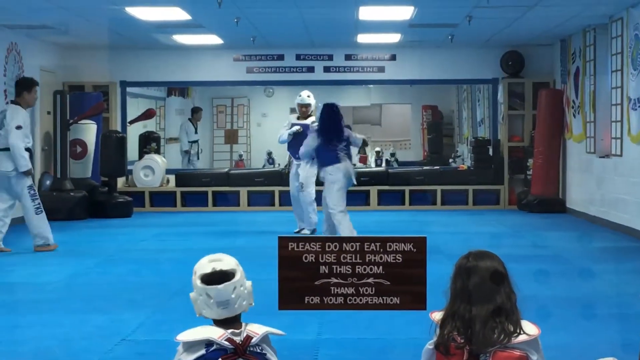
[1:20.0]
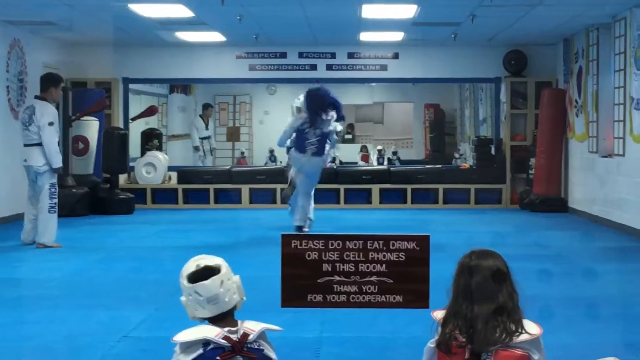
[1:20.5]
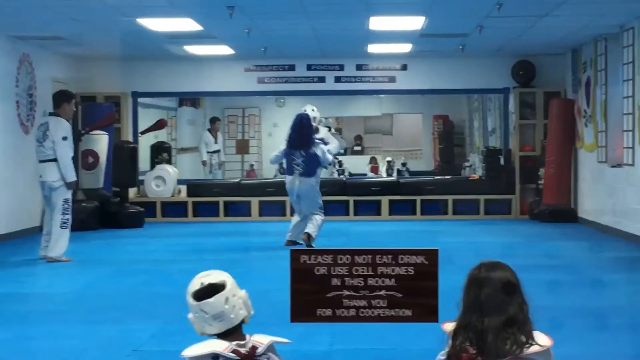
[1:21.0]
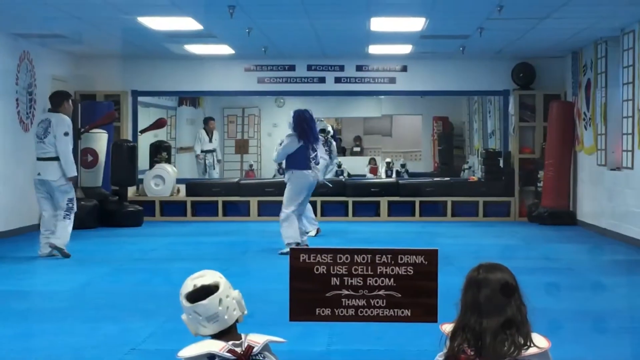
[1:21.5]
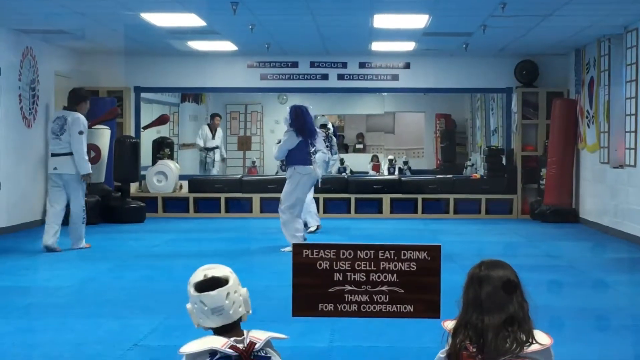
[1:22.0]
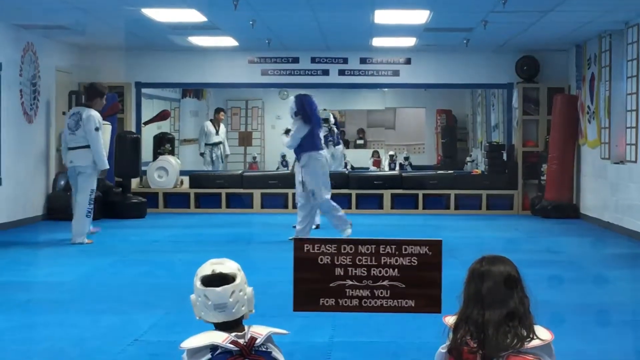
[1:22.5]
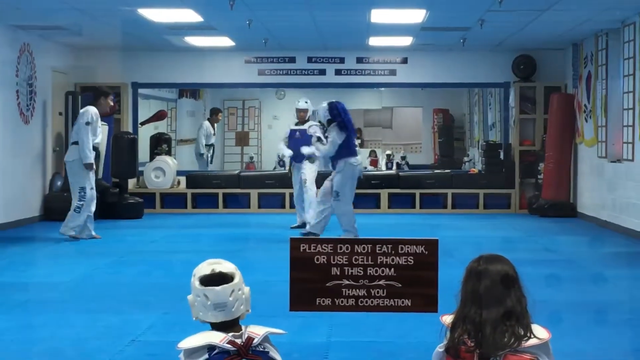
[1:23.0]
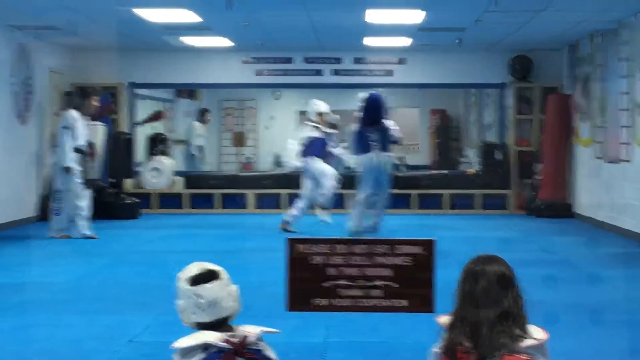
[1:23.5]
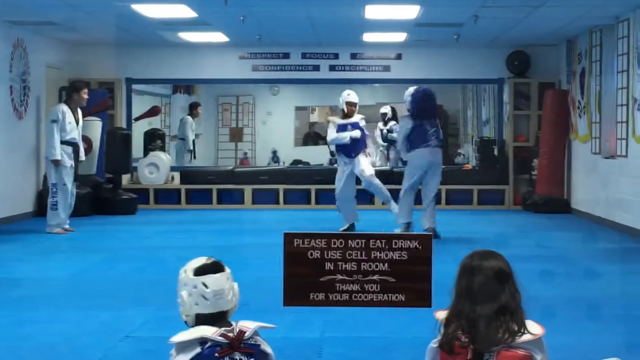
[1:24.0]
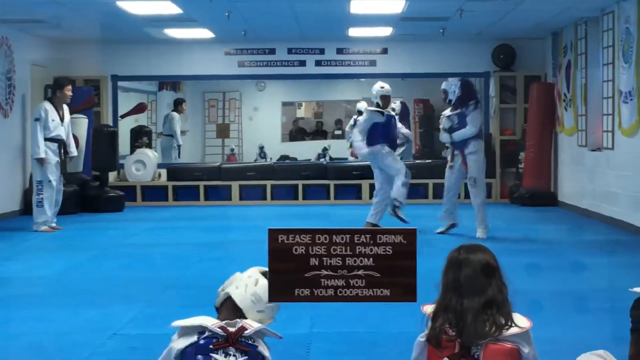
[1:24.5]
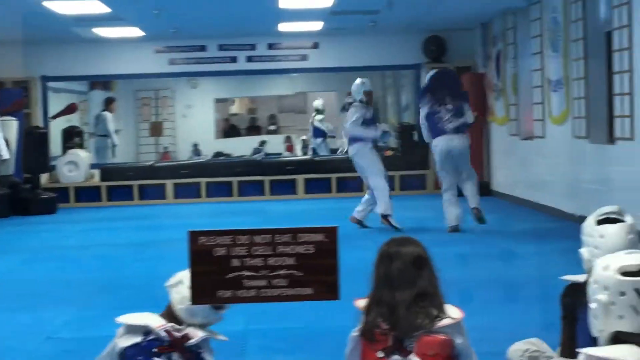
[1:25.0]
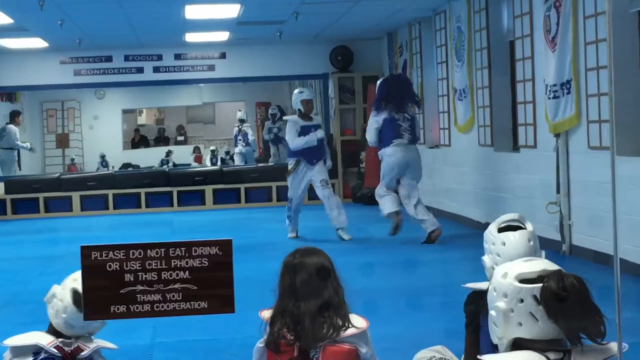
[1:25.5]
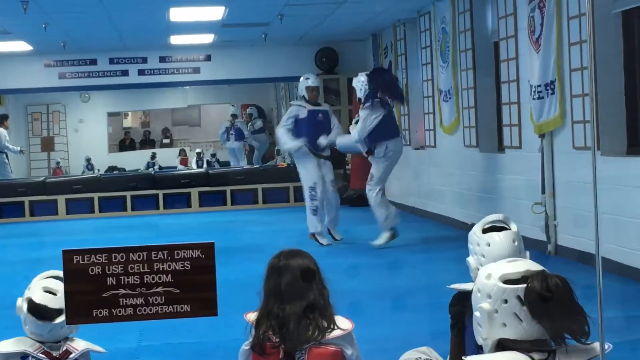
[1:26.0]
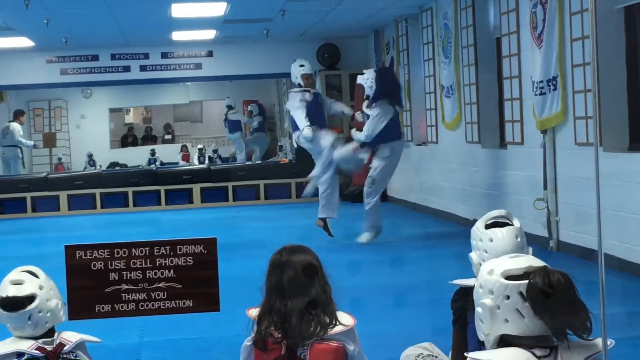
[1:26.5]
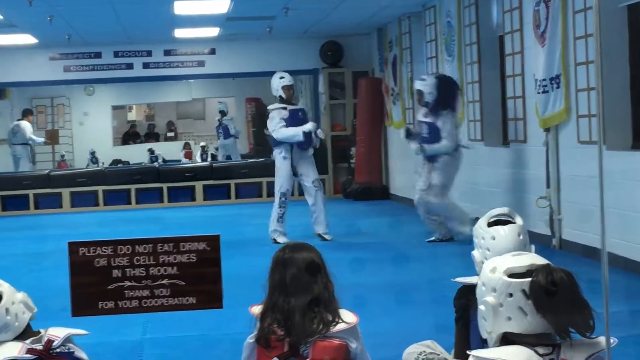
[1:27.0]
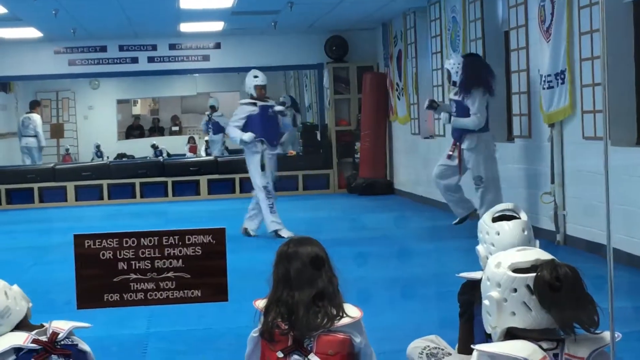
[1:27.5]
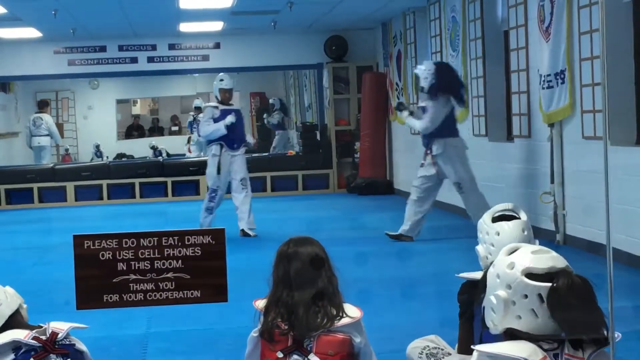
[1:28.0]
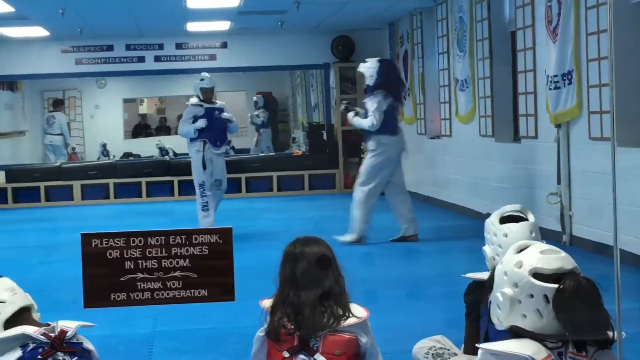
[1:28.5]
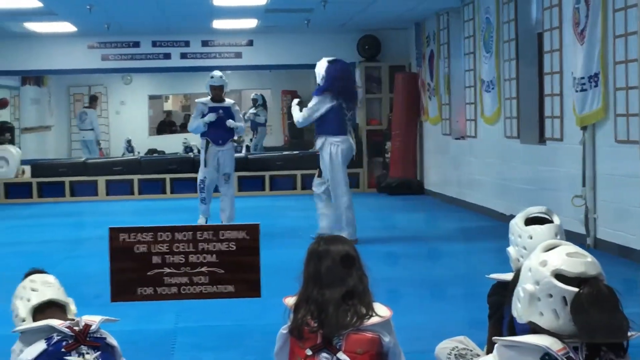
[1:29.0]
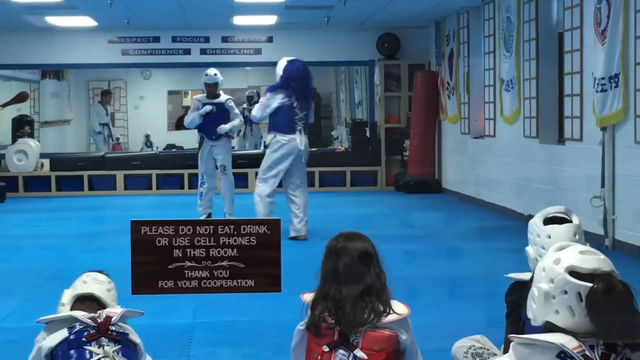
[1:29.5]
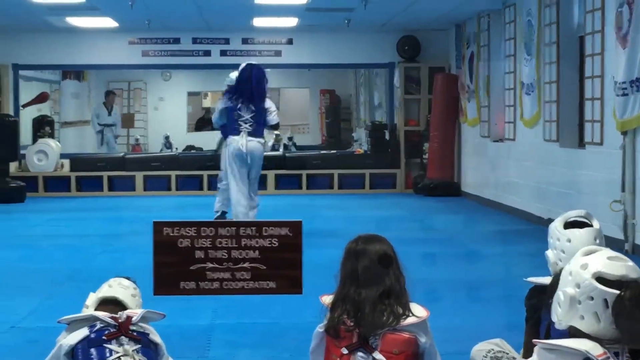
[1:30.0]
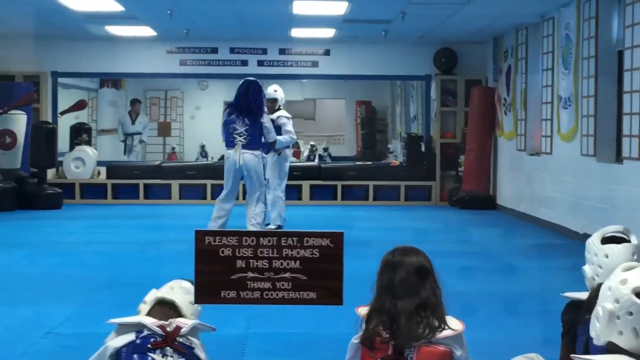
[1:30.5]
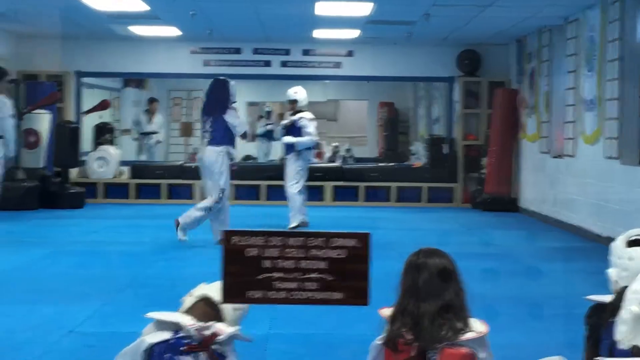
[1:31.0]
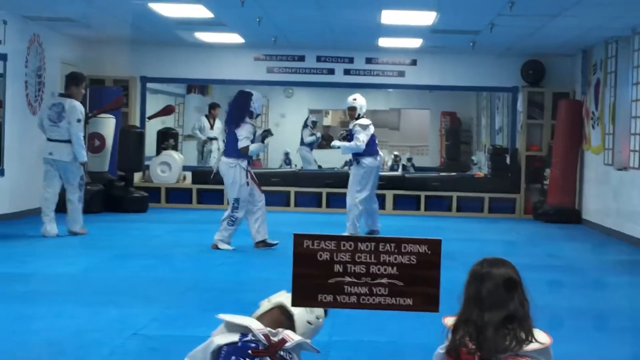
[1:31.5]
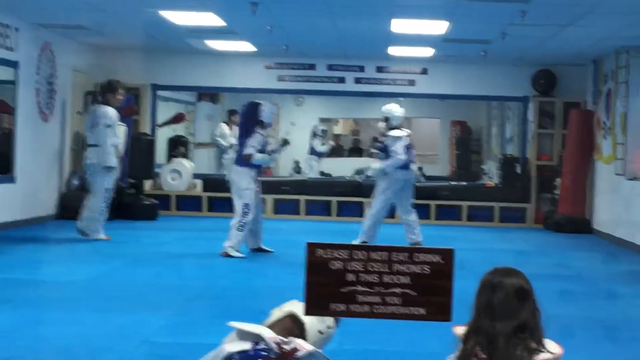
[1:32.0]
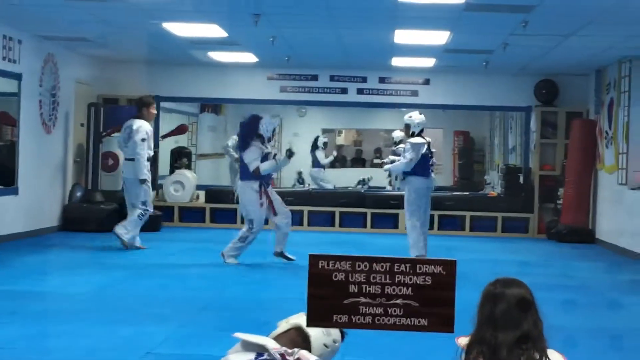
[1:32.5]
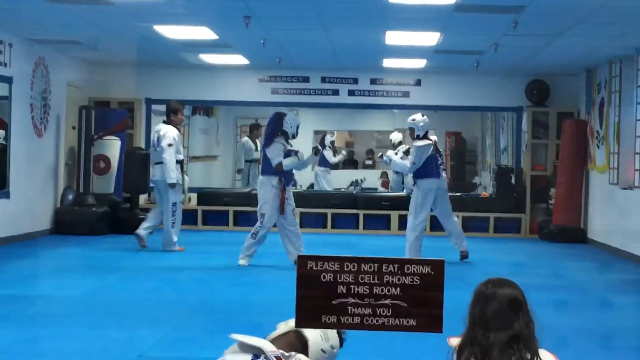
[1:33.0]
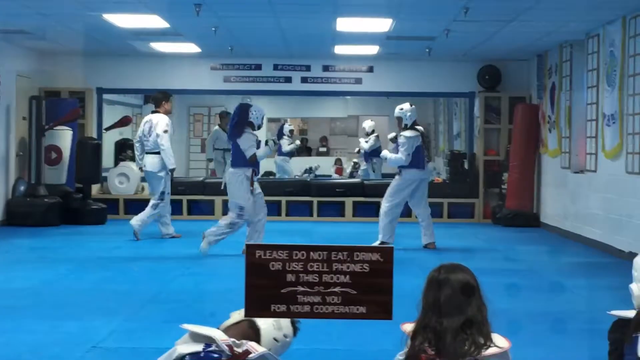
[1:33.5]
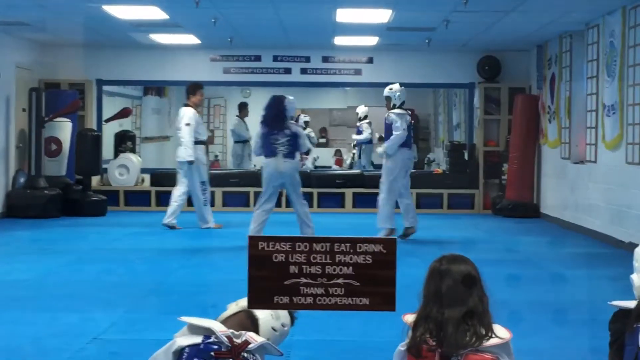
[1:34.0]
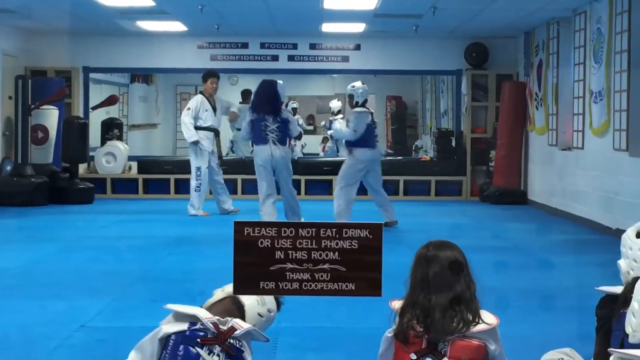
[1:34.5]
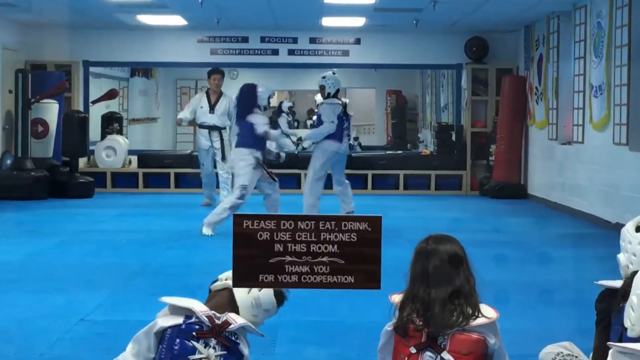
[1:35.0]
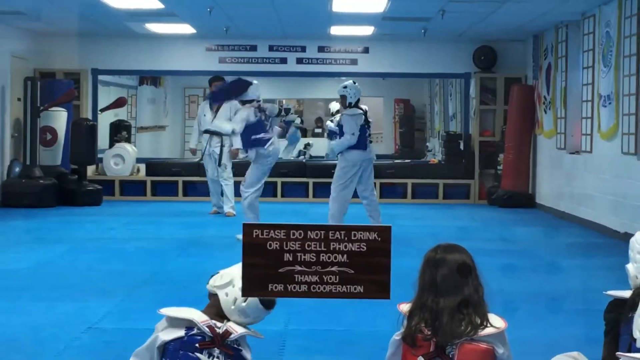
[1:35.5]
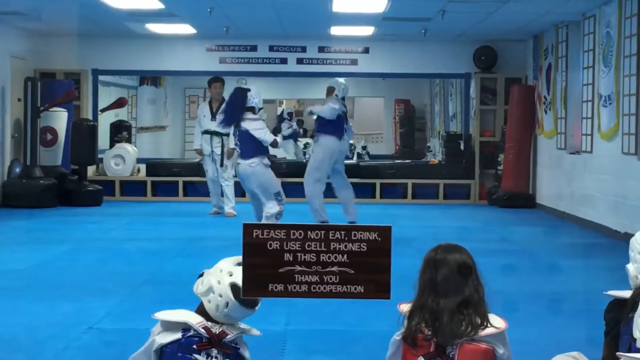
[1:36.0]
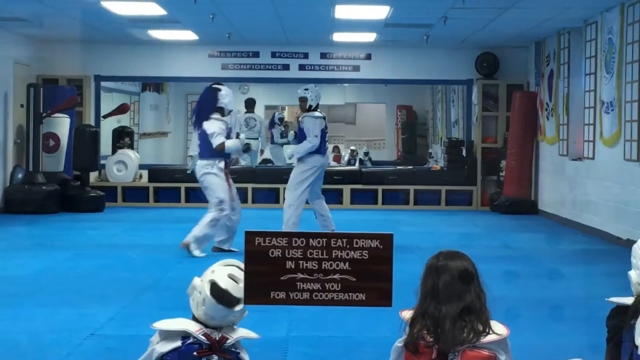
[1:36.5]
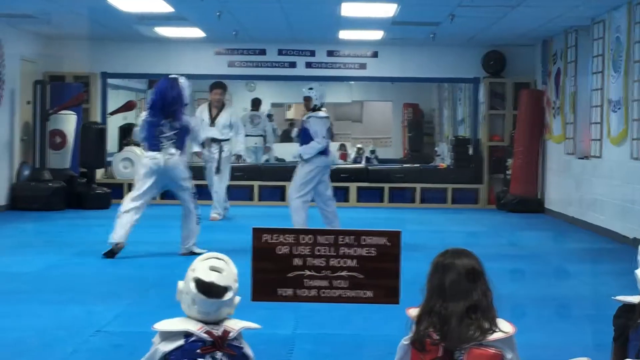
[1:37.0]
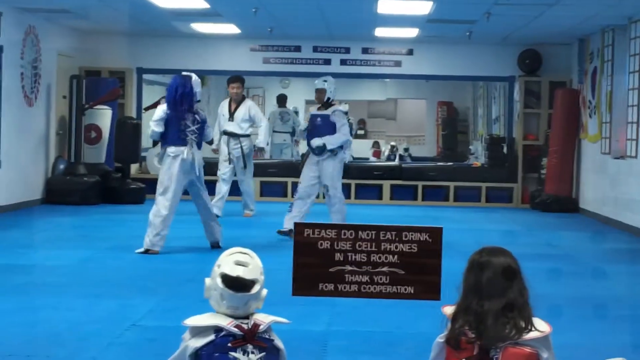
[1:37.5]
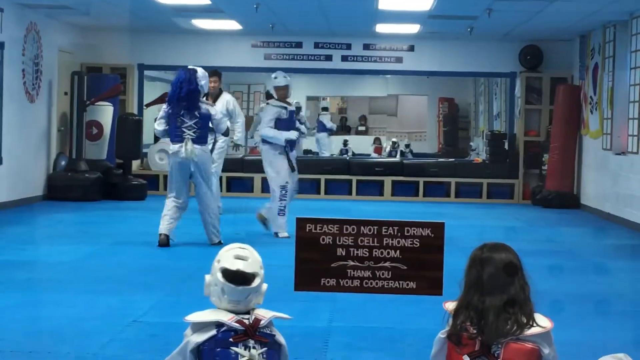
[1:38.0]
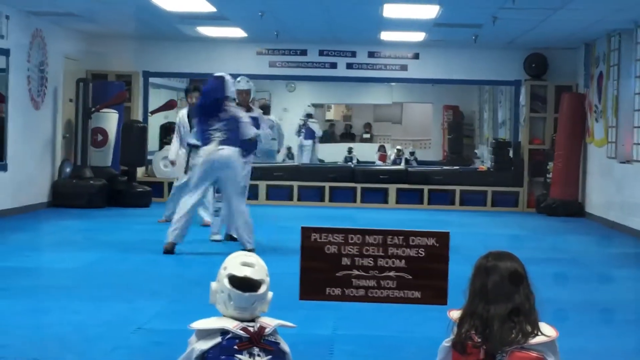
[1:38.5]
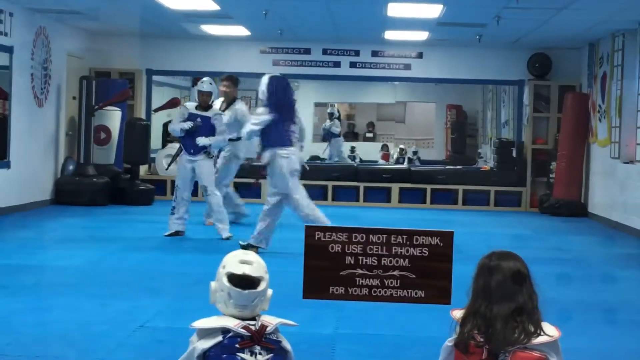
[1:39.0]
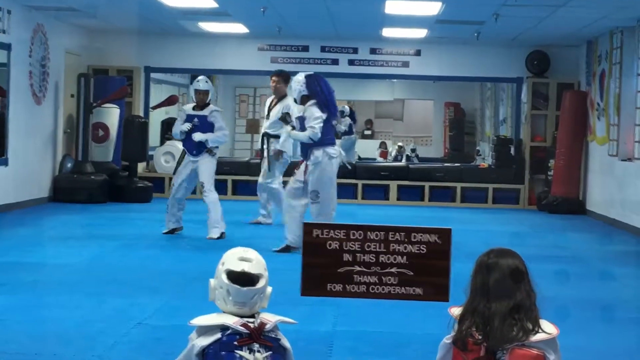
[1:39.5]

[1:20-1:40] The two women in white outfits with blue protective chest pieces and white headgear are on the large blue mat. Behind them is a large rectangular mirror with a blue border. Above the middle of the mirror are five rectangular signs reading "Respect", "Focus", "Discipline", "Confidence" and "Defense". At the bottom of the frame, text says "Please do not eat, drink, or use cell phones in this room. Thank you for your cooperation." The right fighter lifts a leg to attack, and the left fighter does the same, lifting her knees. The right fighter begins attacking with the legs. At the bottom, a group of children watches. The fighters are in the middle of the mats in their fighting stances, and one of them does a kick spin. As they sort of circle each other, the instructor sort of walks around the whole time, giving them space. The instructor wears a white suit with a black belt.